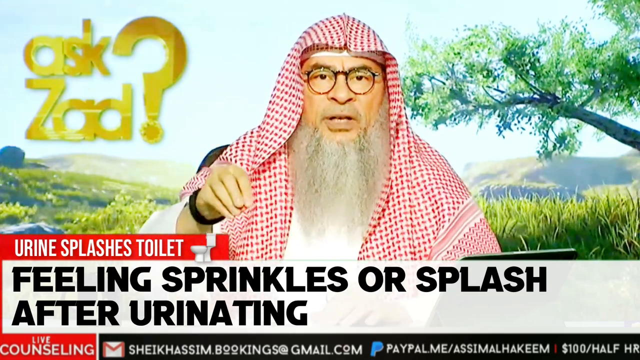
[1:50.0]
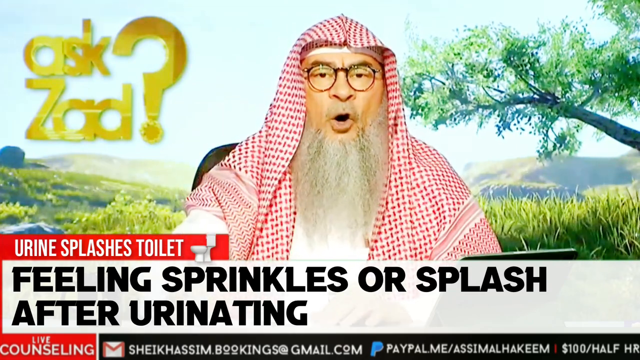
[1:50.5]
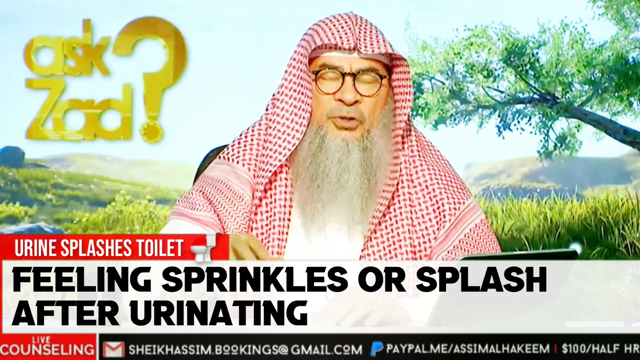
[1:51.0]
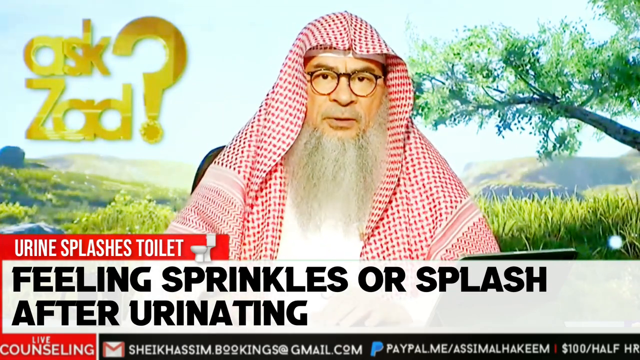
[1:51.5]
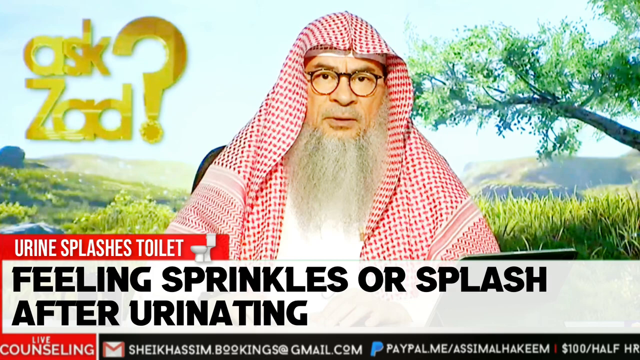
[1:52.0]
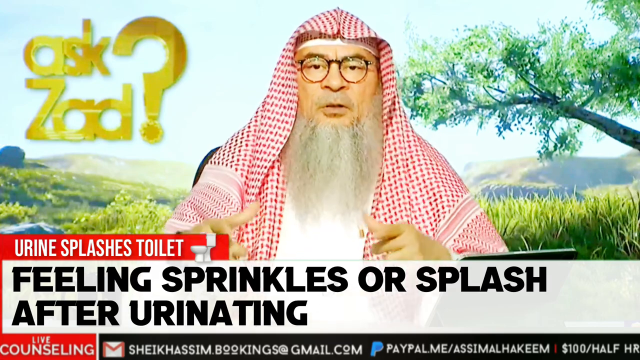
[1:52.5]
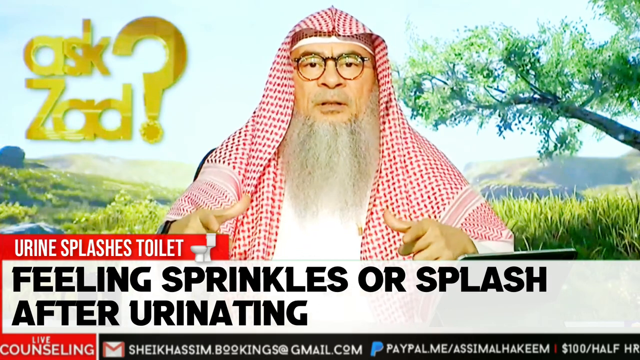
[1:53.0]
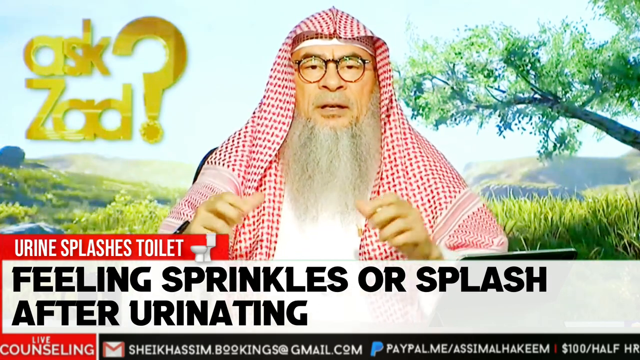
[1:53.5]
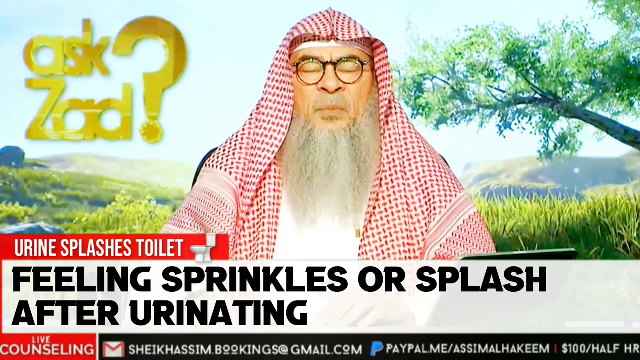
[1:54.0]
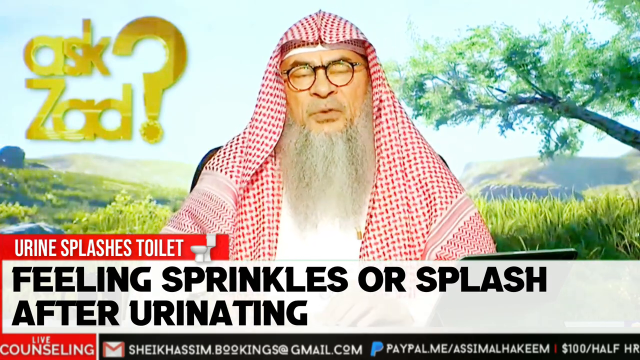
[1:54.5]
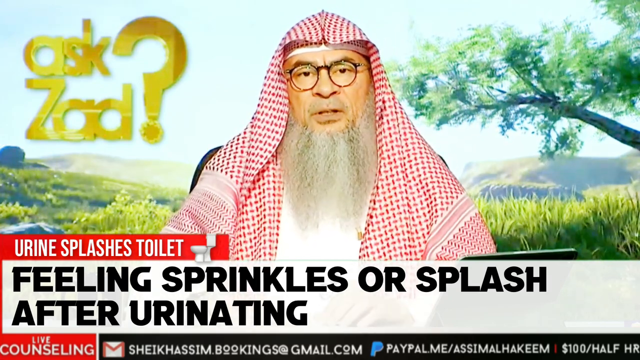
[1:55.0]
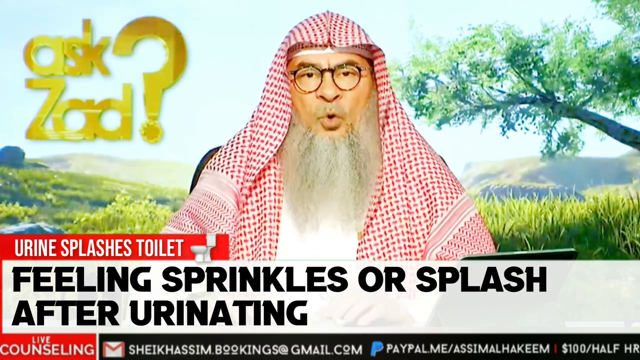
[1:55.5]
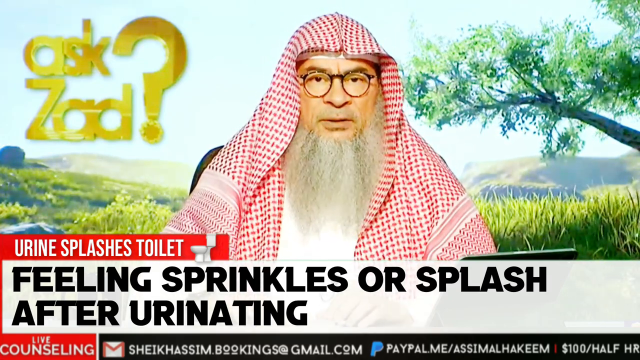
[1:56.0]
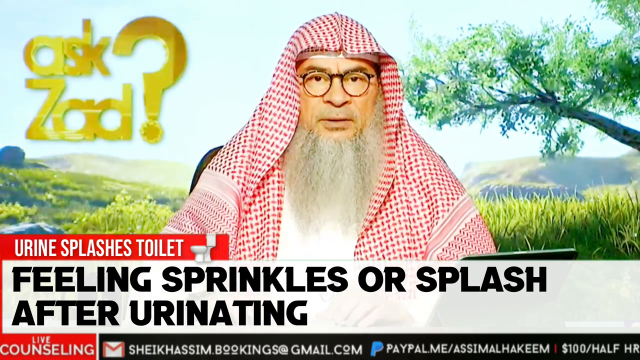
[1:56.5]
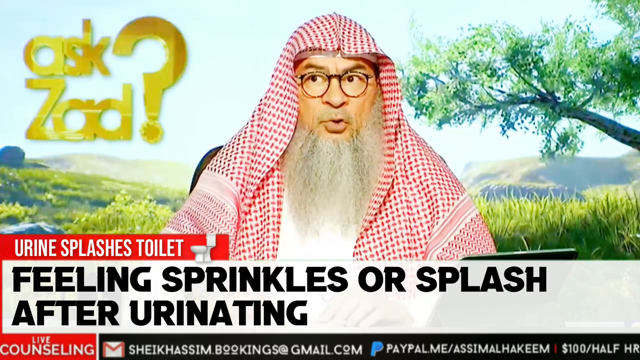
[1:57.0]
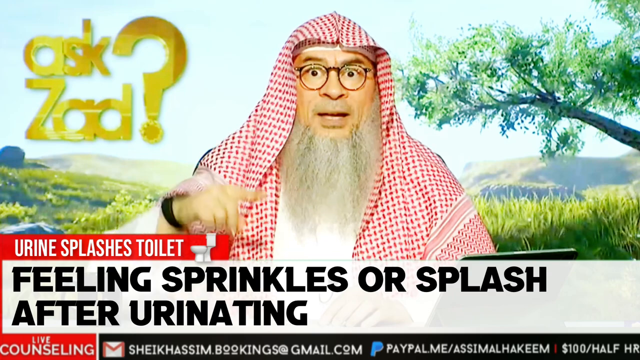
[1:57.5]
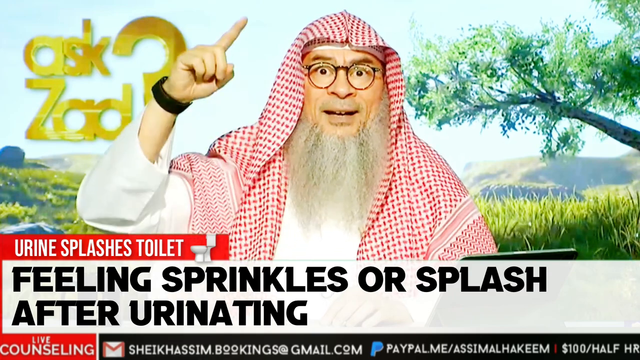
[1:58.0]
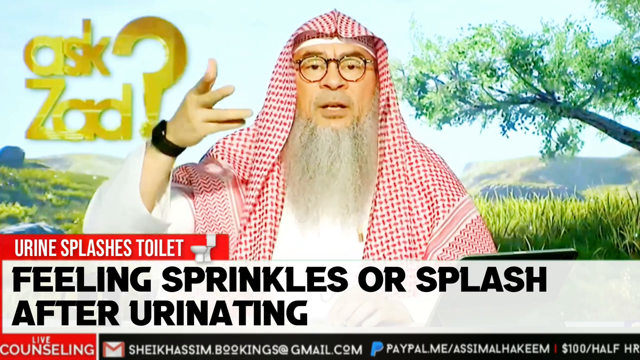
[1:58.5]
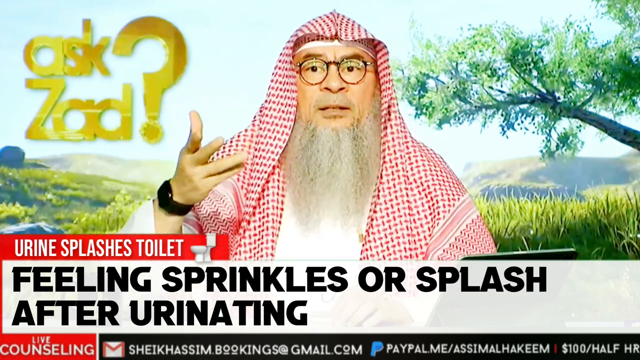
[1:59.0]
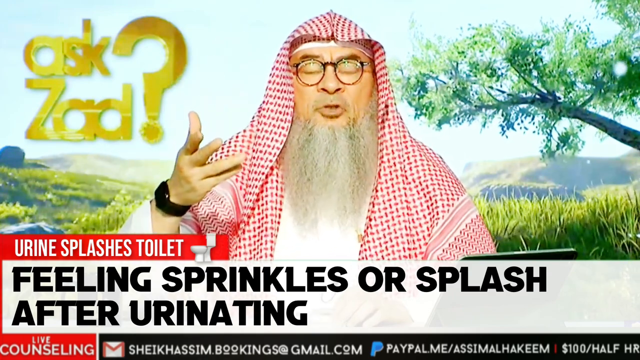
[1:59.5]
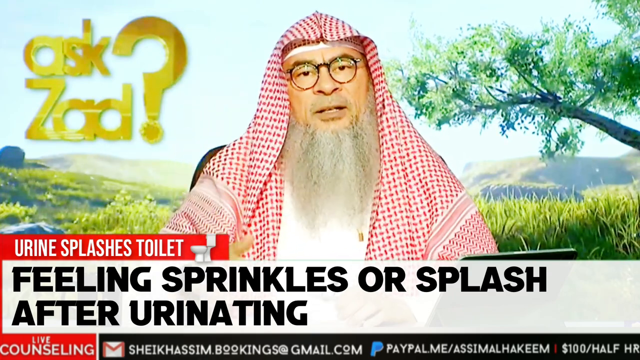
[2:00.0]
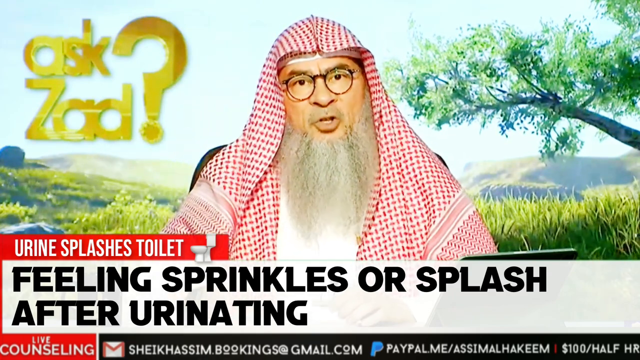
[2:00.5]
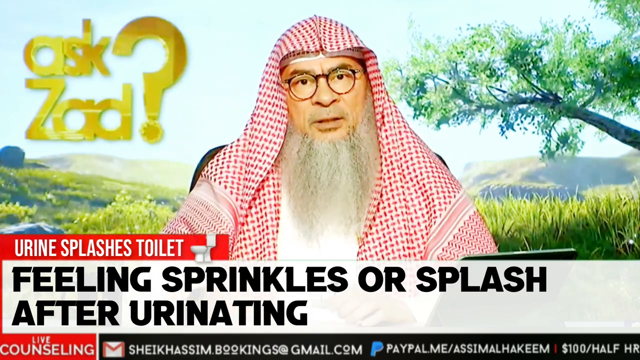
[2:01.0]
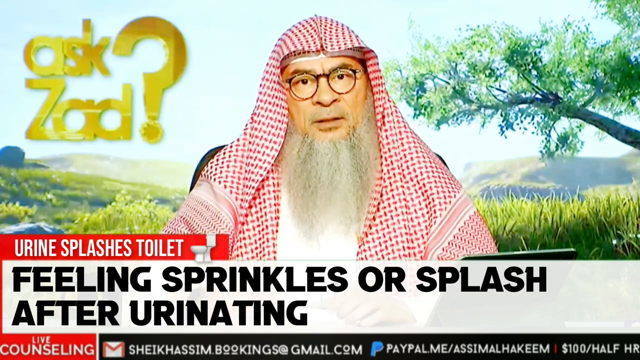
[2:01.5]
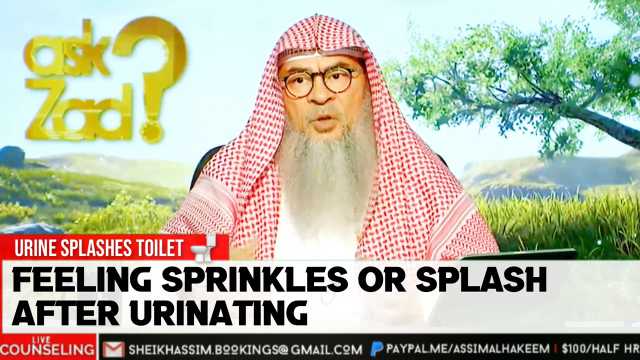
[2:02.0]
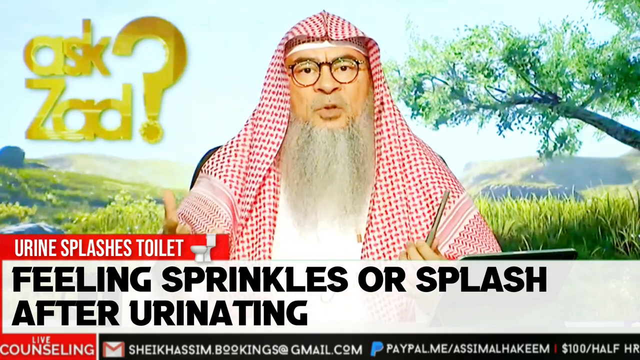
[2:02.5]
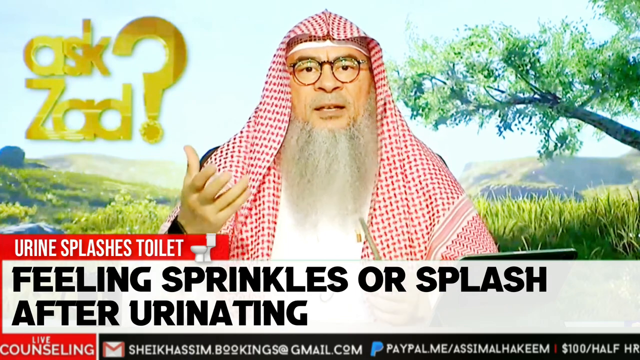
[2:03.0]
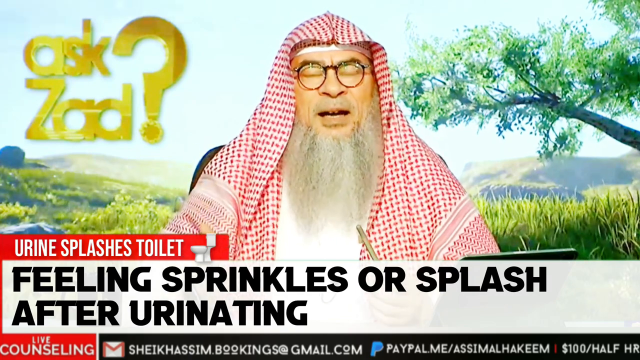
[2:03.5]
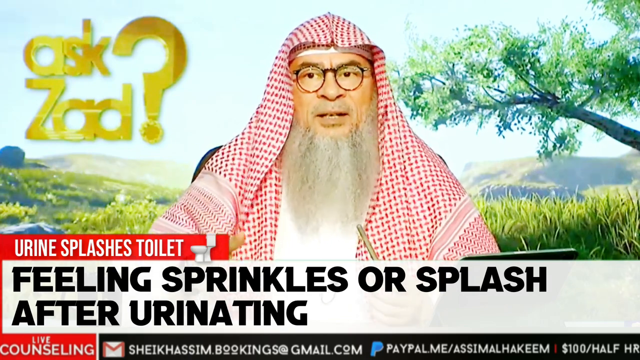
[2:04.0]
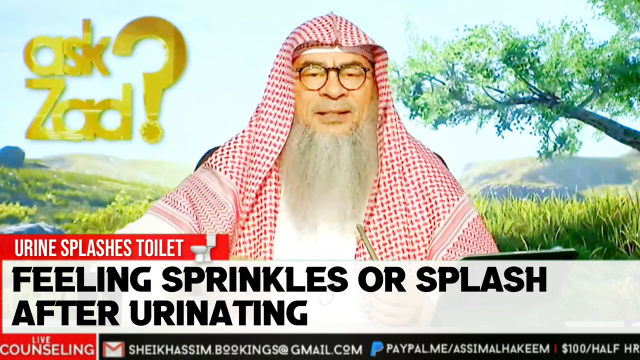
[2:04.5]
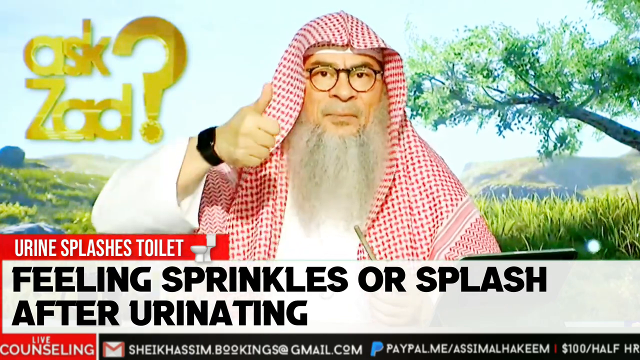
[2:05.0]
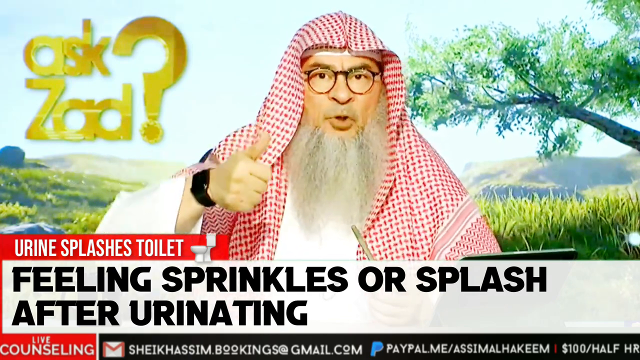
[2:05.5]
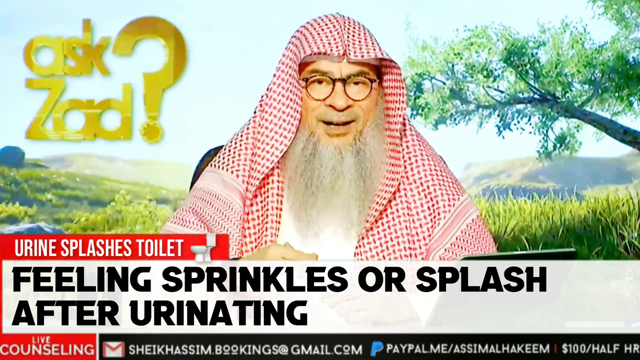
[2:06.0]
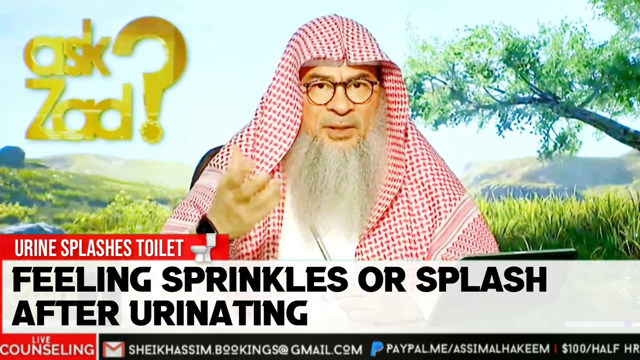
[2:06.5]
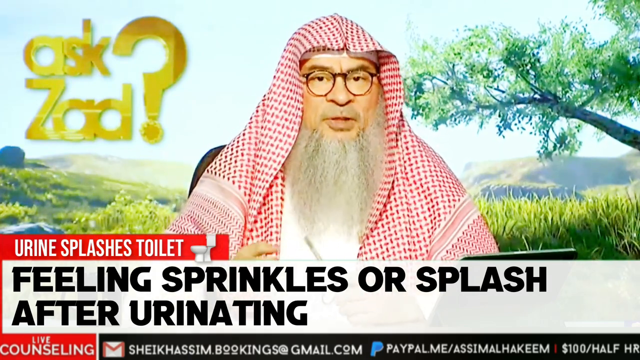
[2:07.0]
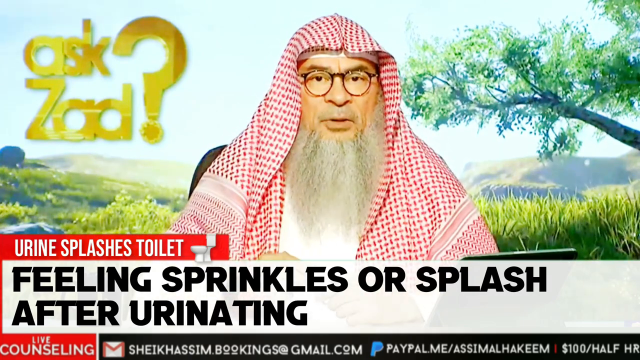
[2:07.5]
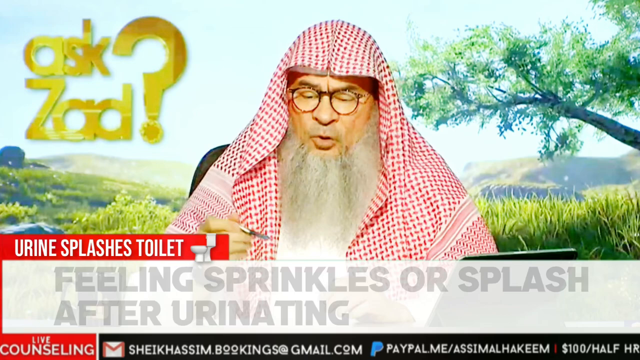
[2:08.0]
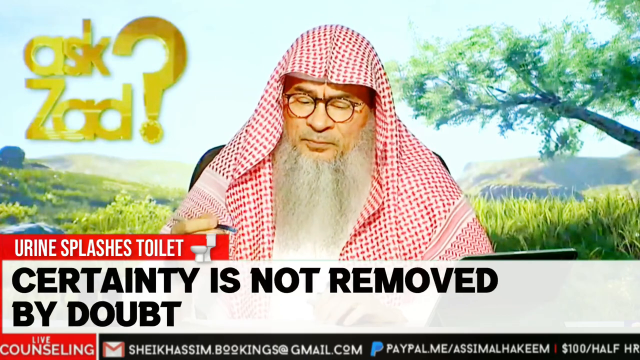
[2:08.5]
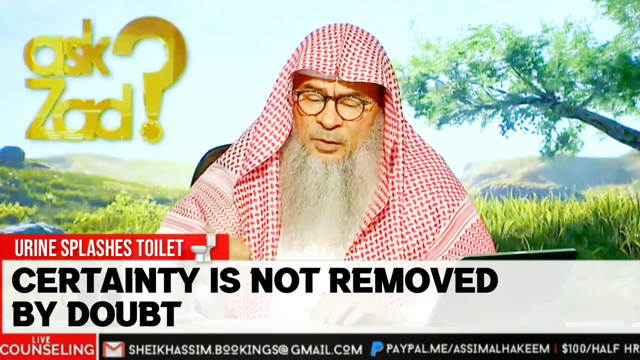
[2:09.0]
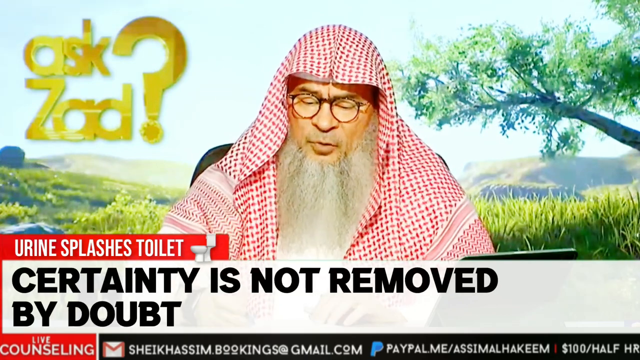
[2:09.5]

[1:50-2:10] The caption at the bottom appears back on the screen, "The urine splashes the toilet," with a toilet cartoon graphic, and "a feeling sprinkles or splash after urinating." The Sheik looks away as he talks, focusing intently. His hands are on the table, and he keeps gesturing with his right hand. The animated background is the same. His email and PayPal information are still on the screen in the caption below. He gives a thumbs up as he talks, and the bottom changes for a brief second. The caption then changes to "certainty is not removed by doubt," while the topic "urine splashes toilets" continues. He looks at the piece of paper, and his facial expressions look passionate as he makes his points.